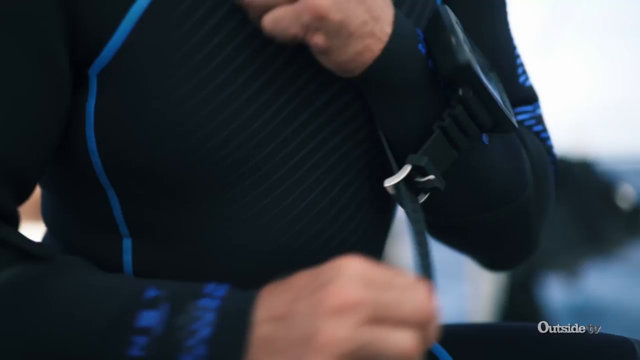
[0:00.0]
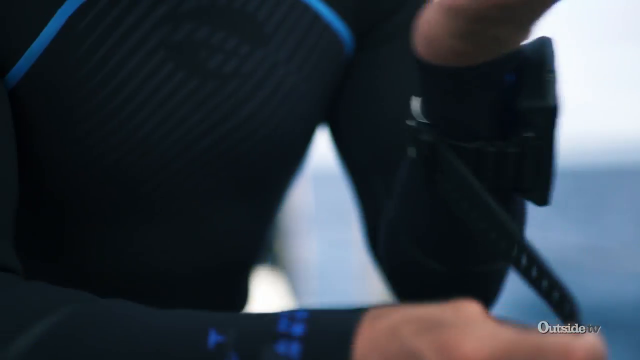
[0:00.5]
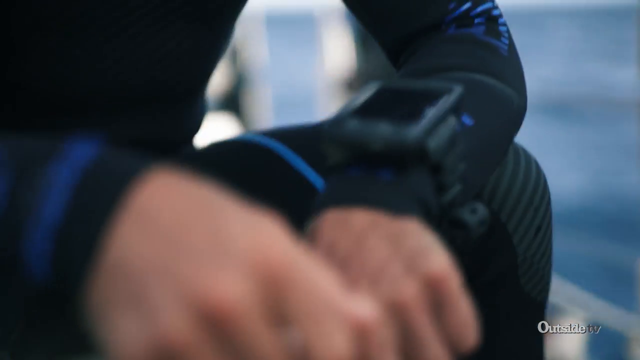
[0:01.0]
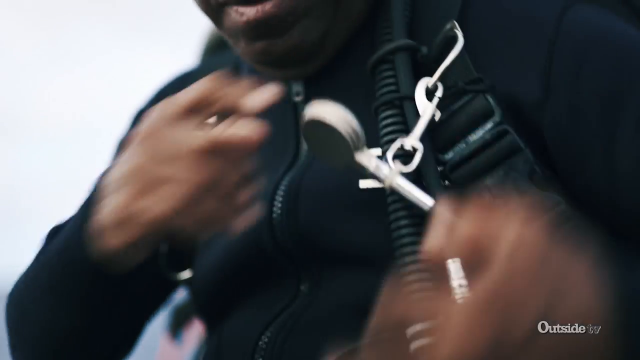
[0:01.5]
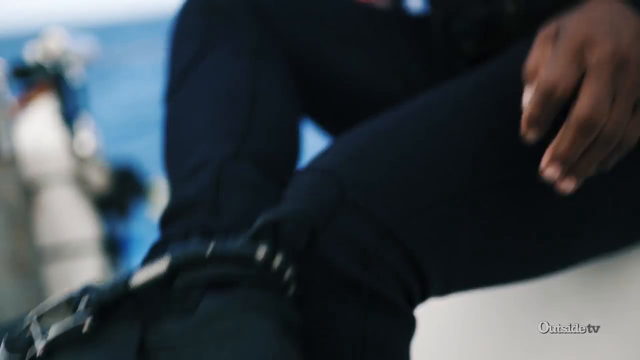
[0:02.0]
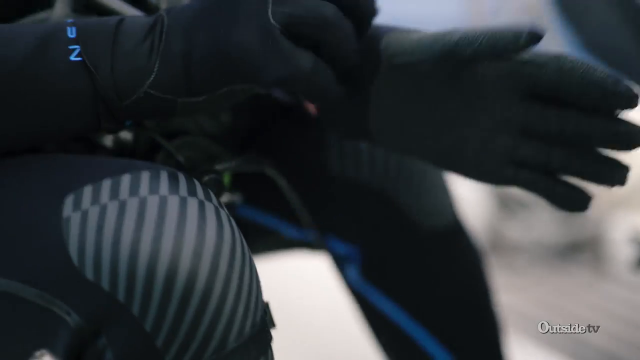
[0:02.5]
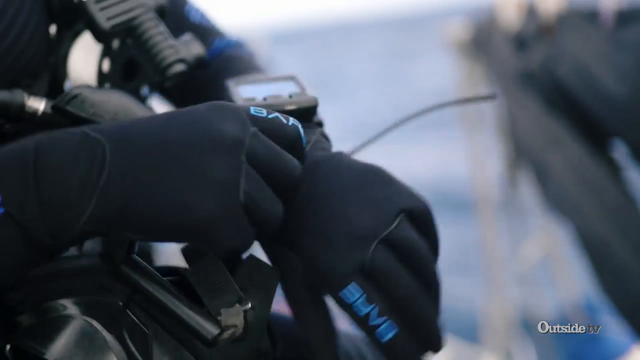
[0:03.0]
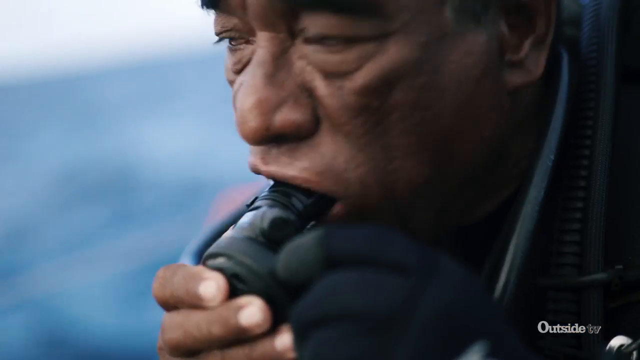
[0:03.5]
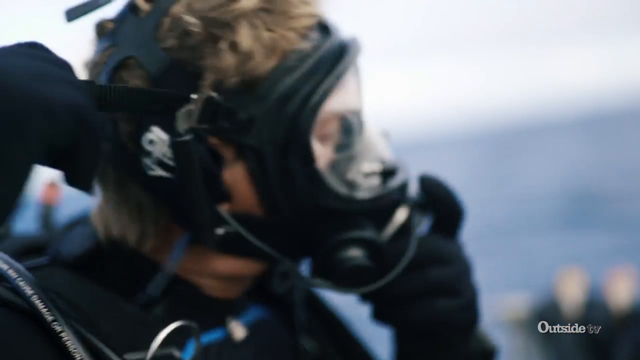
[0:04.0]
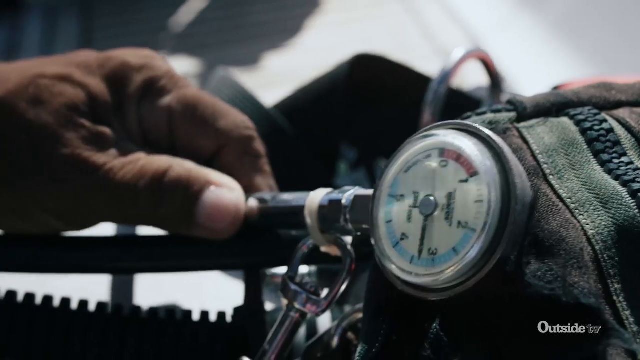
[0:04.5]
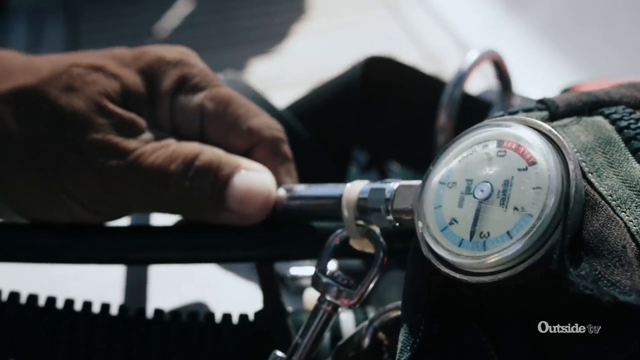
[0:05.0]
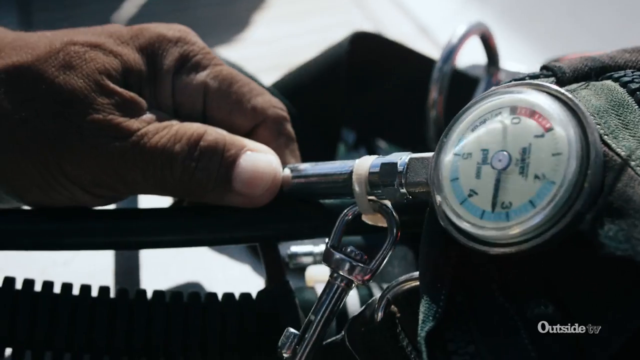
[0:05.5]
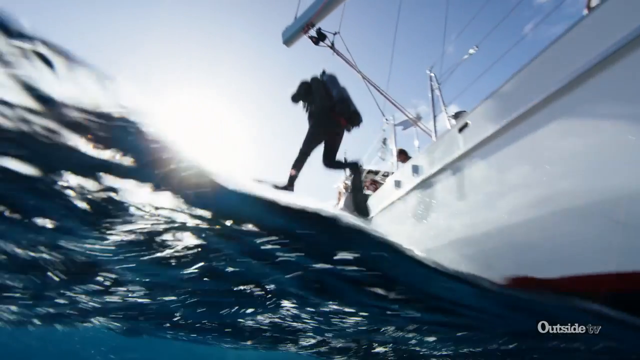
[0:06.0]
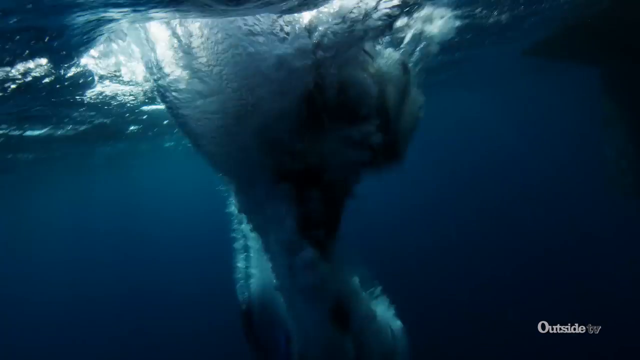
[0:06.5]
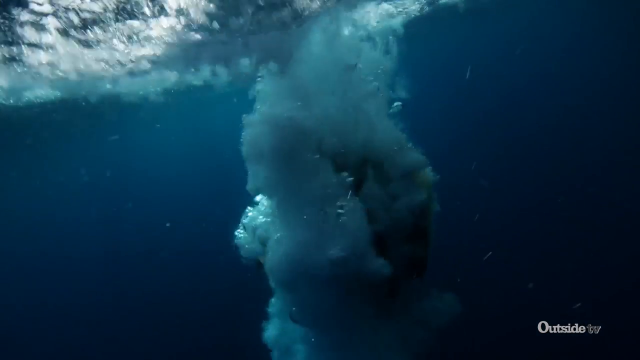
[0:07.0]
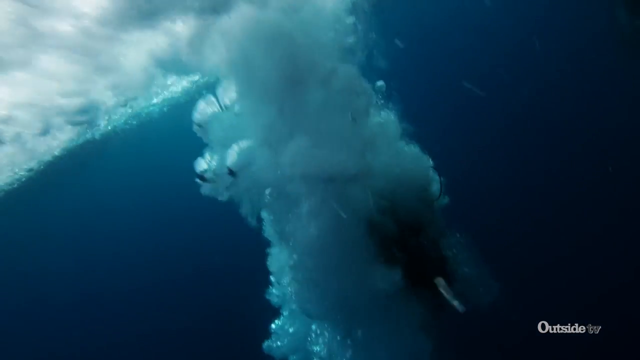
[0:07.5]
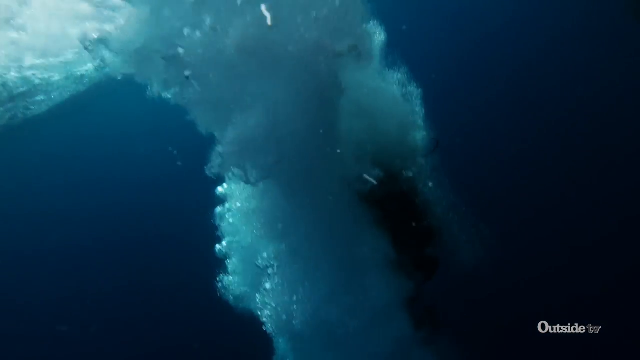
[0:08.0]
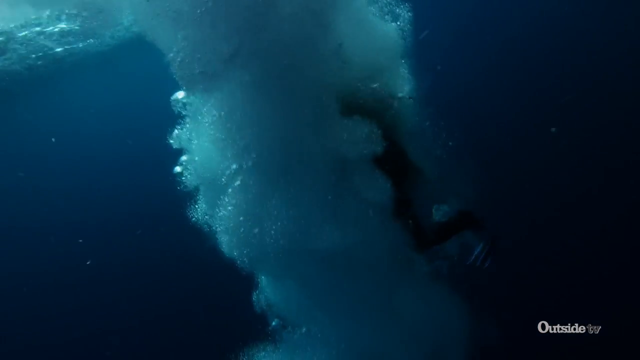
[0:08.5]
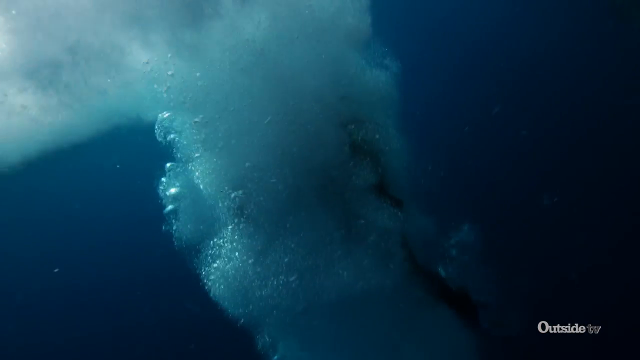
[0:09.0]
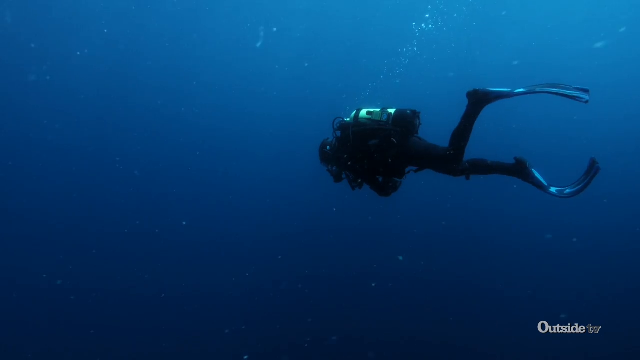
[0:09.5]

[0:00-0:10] A close-up shows a person tying something around their wrist, followed by a brief close-up of the item, which appears to be a small screen on a watch. In rapid succession they put on a number of other pieces of clothing and equipment, such as gloves, and put a breathing tube into their mouth. They check an oxygen meter or something similar. Someone in full scuba gear then jumps off the side of a boat into the water, and underwater a large number of bubbles rise as they start to descend. The shot cuts to them swimming in the ocean, their legs slowly pushing behind them.